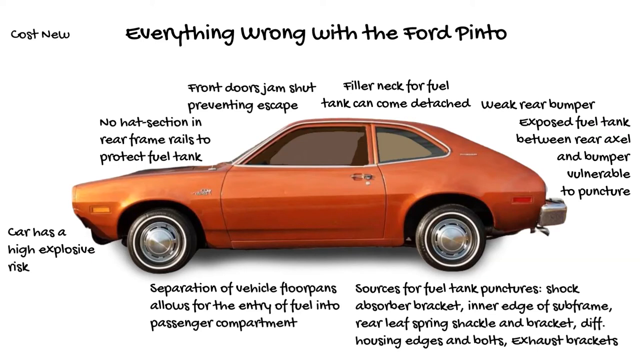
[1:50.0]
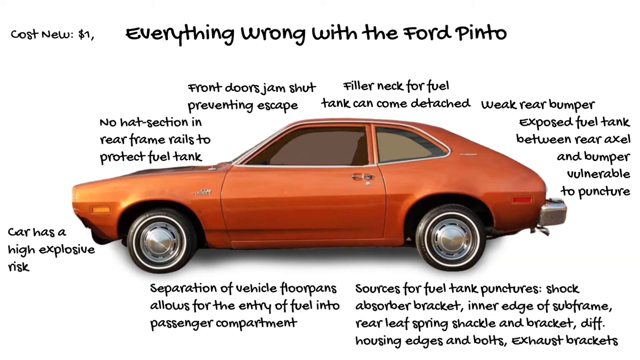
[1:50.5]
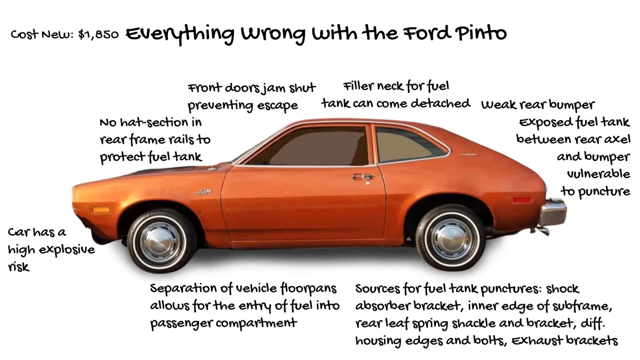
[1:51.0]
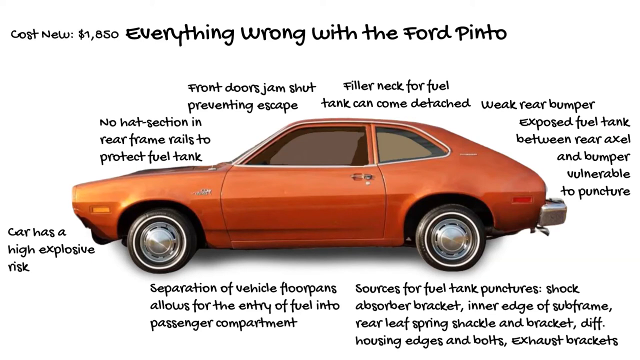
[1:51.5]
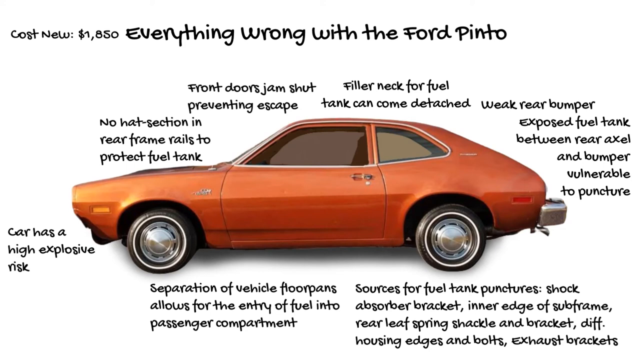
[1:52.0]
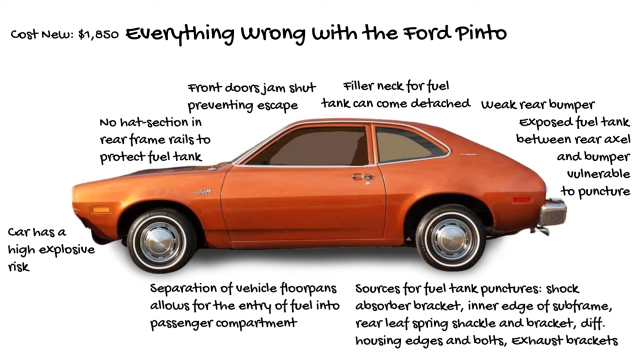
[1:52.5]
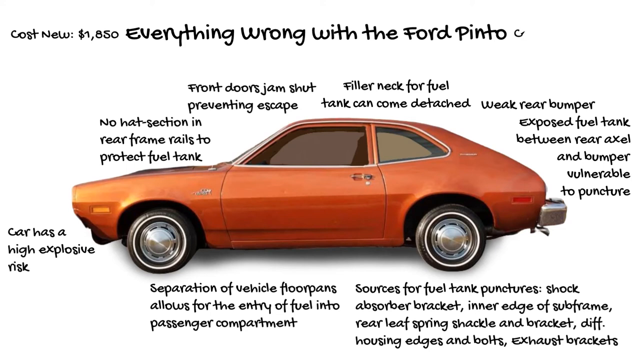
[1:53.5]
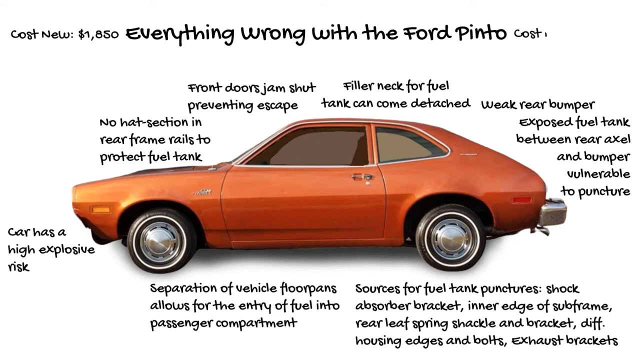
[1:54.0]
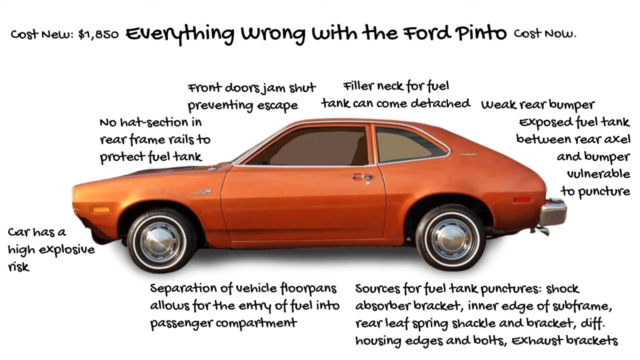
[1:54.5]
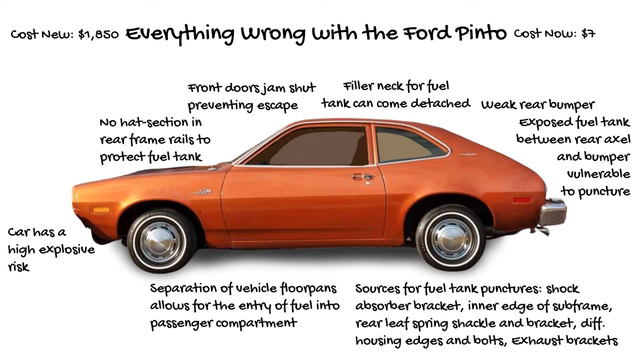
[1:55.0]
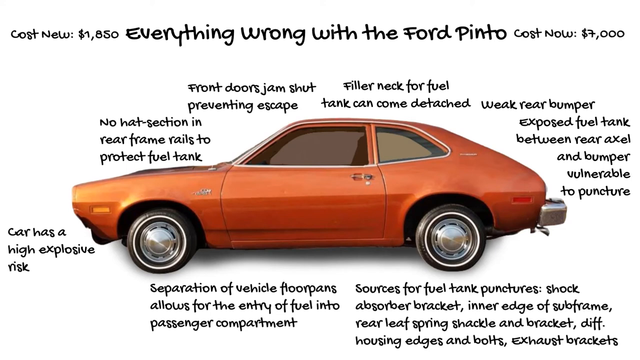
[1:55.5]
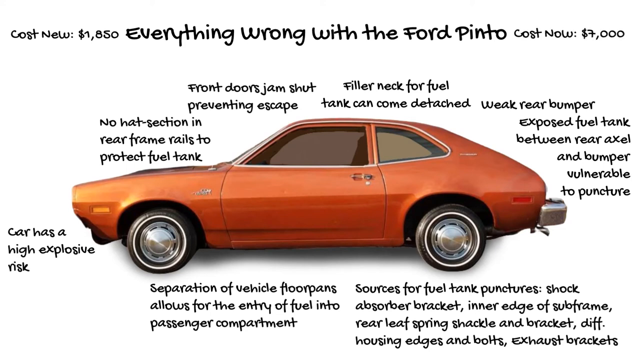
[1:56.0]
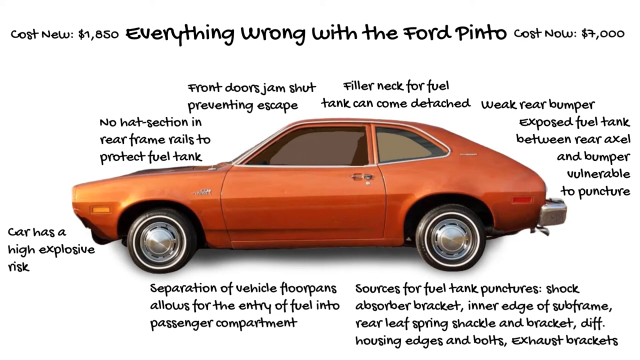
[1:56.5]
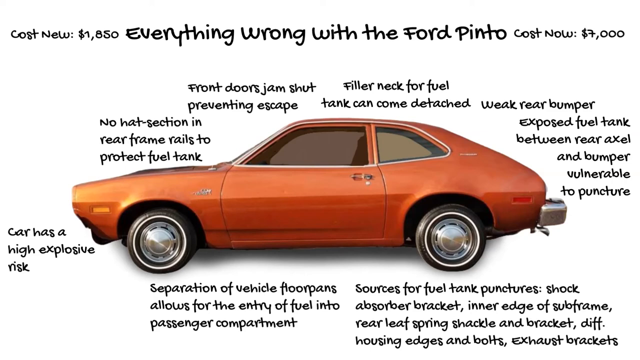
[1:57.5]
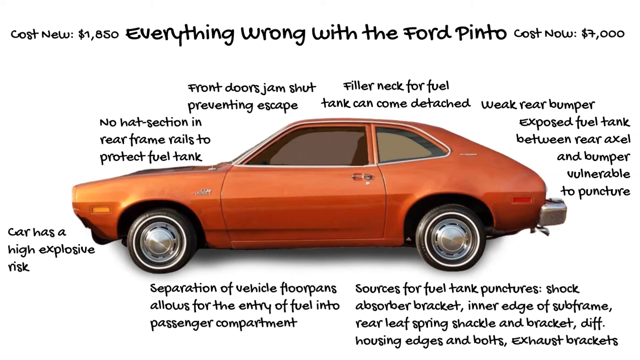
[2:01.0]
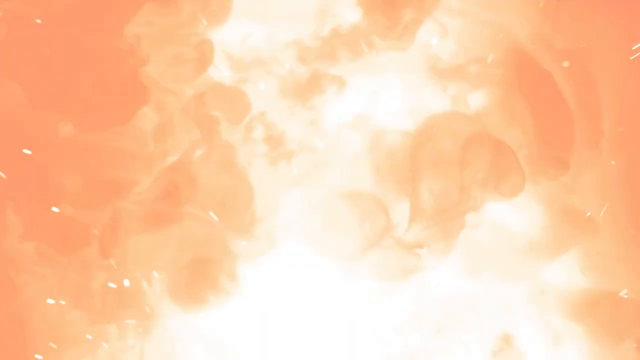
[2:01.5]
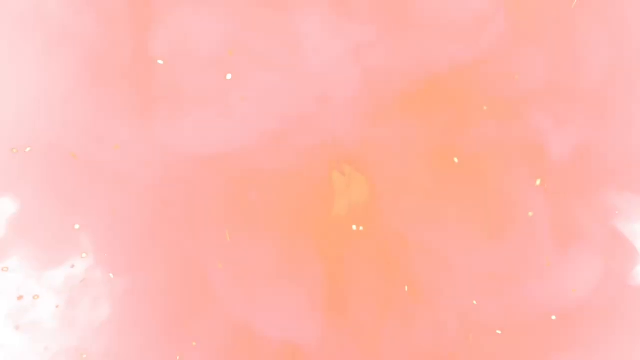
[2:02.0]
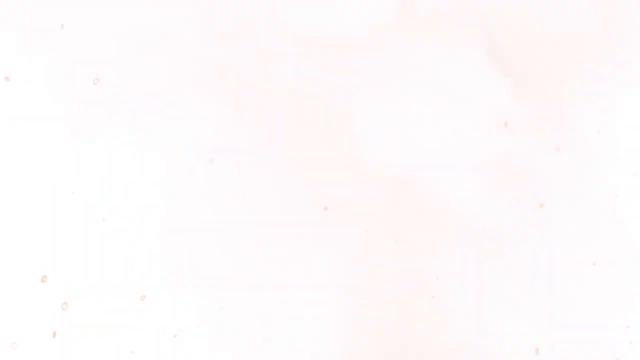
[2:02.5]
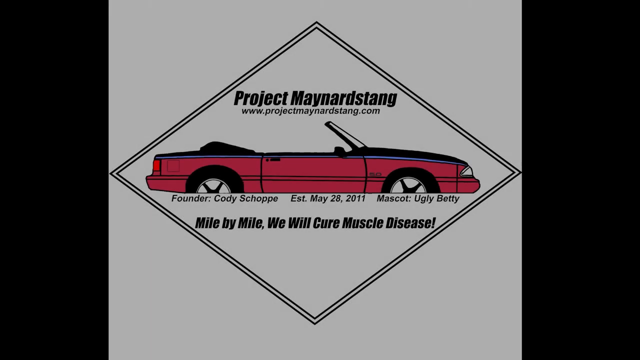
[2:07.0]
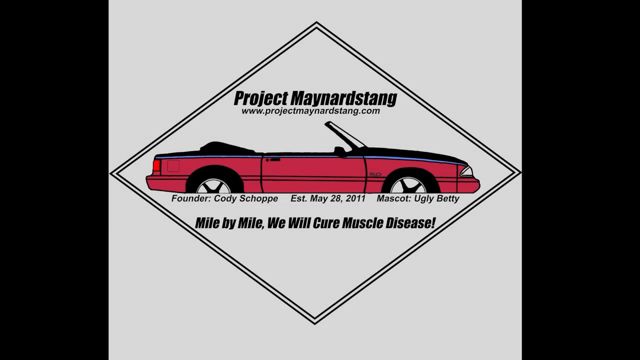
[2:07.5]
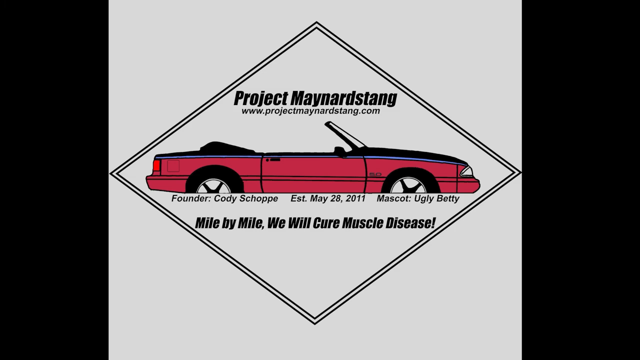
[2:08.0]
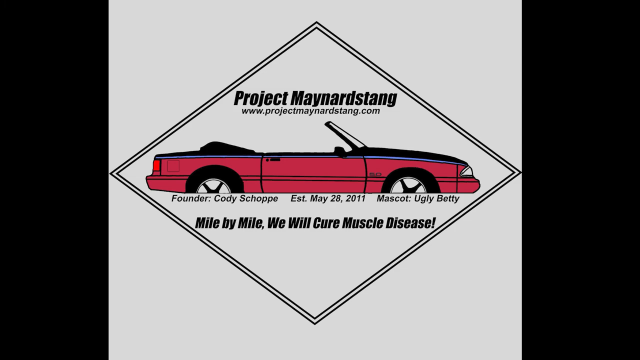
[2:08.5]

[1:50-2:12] "Everything wrong with the Ford Pinto" is written at the top of the screen, and an orange Ford Pinto is in the middle, seen from the driver's side. Words are written all around the vehicle. Over the hood: "no hat section in rear frame rails to protect fuel tank." Over the windshield: "front doors jam shut preventing escape." Over the roof: "filler neck for fuel tank can come detached." At the rear bumper: "weak rear bumper, exposed fuel tank between rear axle and bumper, vulnerable to puncture." Underneath the rear driver's side tire: "sources for fuel tank punctures, shock absorber bracket, inner edge of strut frame, rear leaf spring shackle and bracket differential." Underneath the front driver's side tire: "separation of vehicle floorpans, allows for entry of fuel into the passenger compartment." Underneath the front bumper: "car has a high explosive risk."